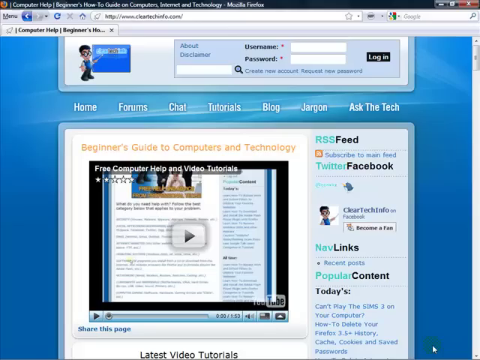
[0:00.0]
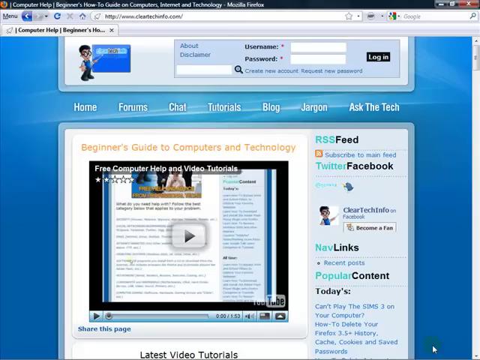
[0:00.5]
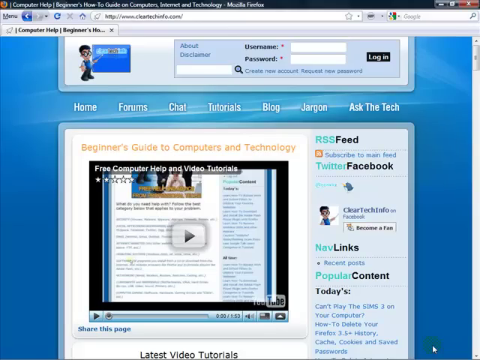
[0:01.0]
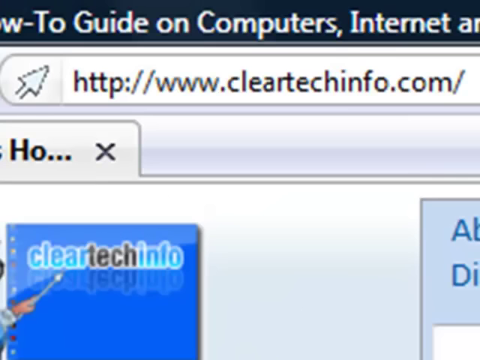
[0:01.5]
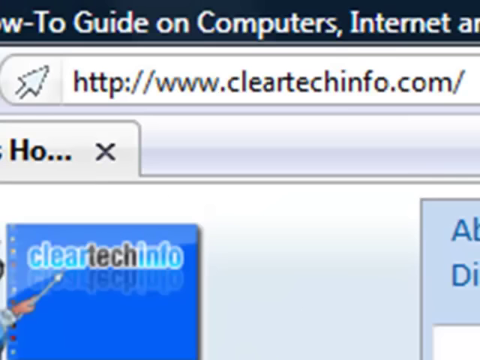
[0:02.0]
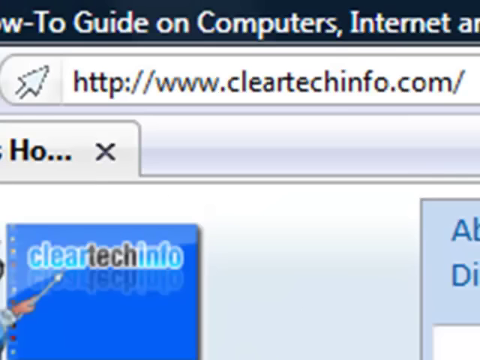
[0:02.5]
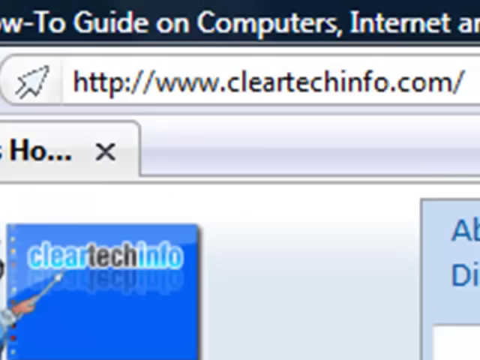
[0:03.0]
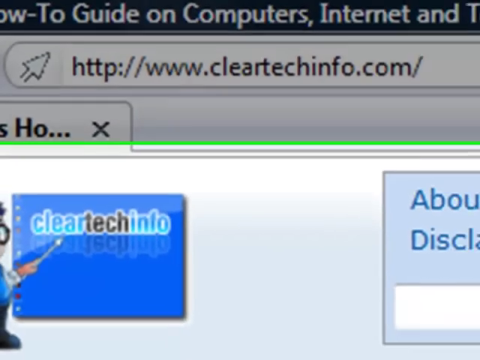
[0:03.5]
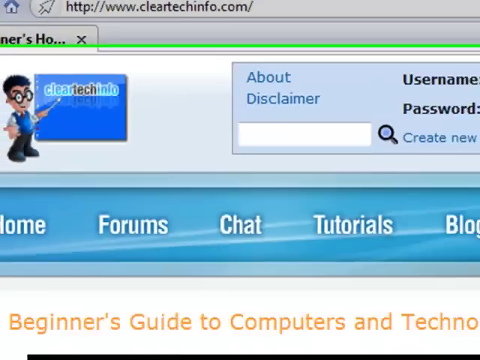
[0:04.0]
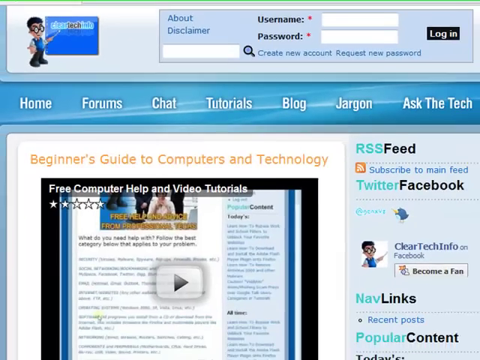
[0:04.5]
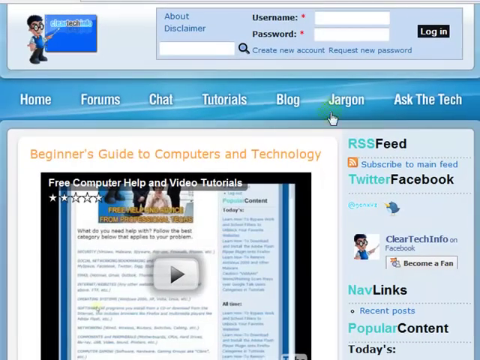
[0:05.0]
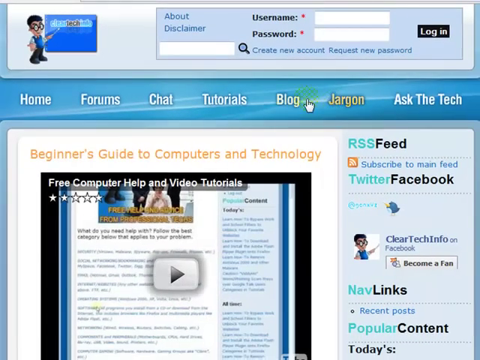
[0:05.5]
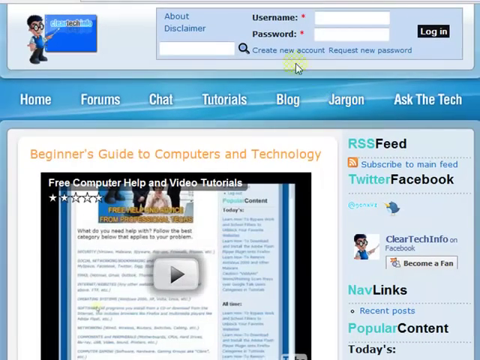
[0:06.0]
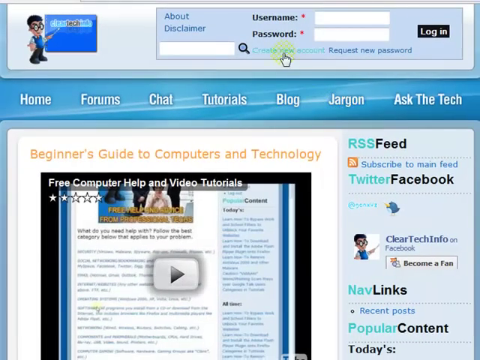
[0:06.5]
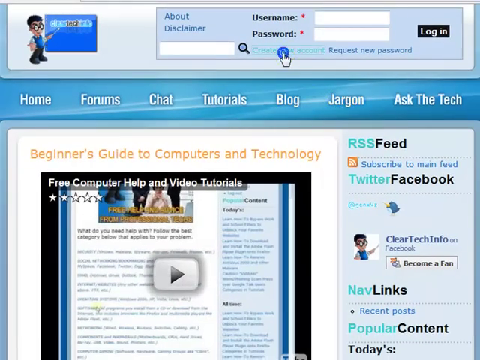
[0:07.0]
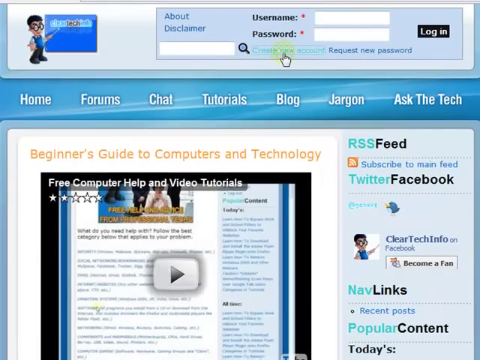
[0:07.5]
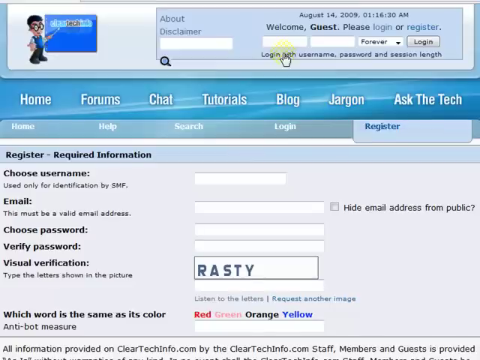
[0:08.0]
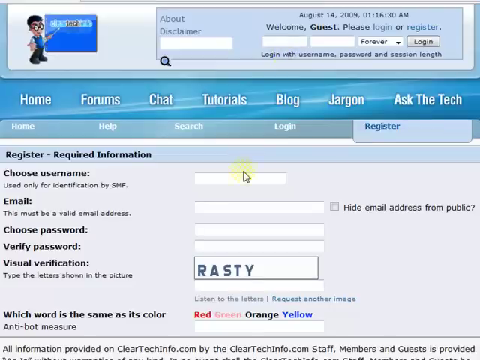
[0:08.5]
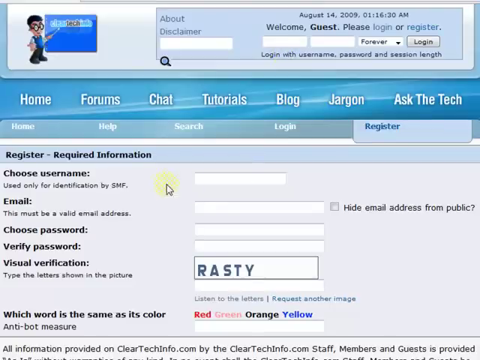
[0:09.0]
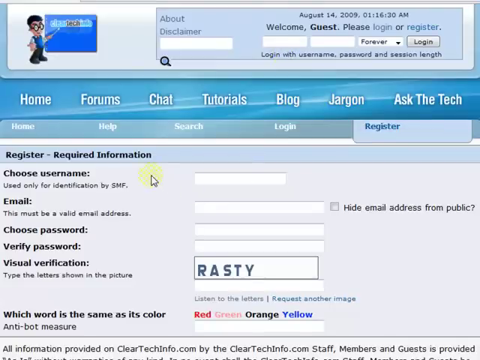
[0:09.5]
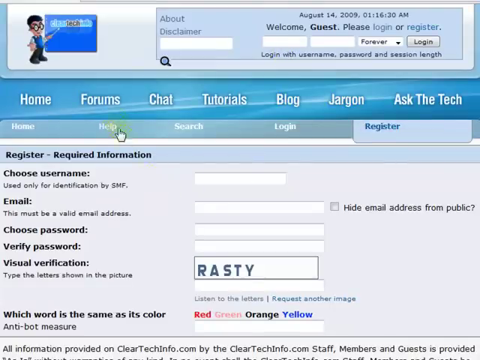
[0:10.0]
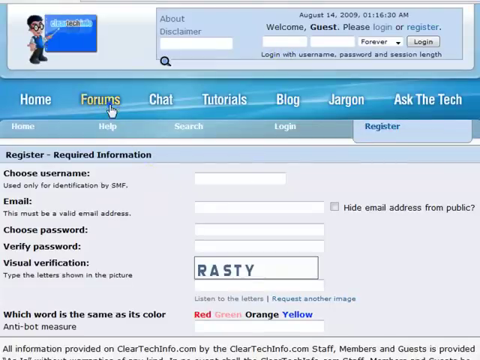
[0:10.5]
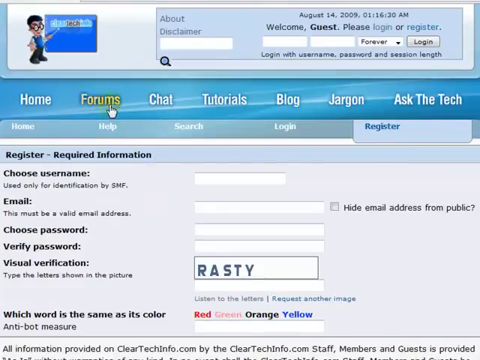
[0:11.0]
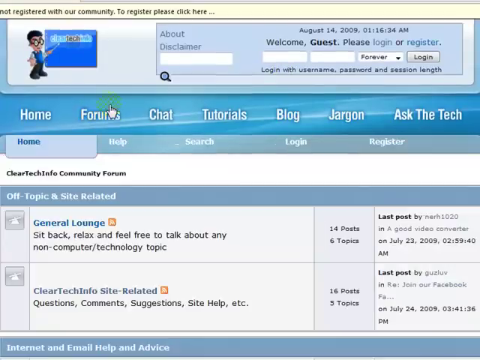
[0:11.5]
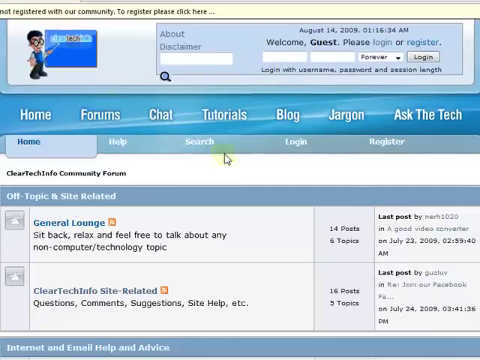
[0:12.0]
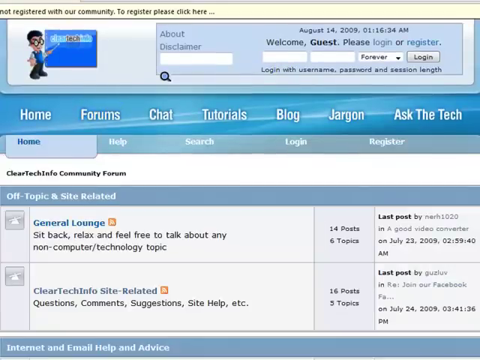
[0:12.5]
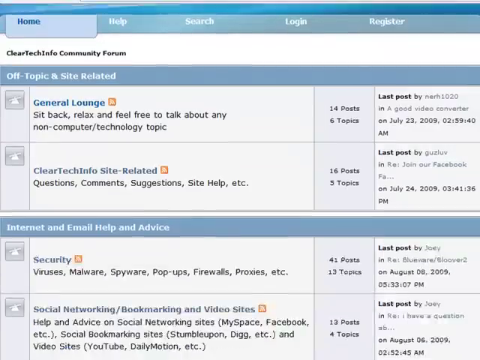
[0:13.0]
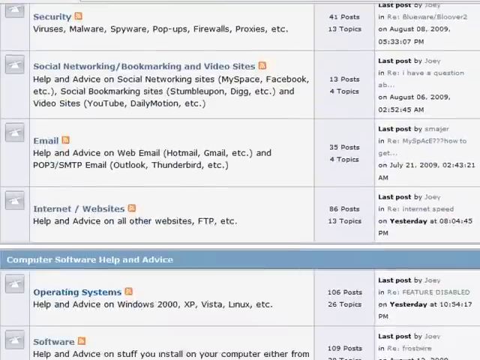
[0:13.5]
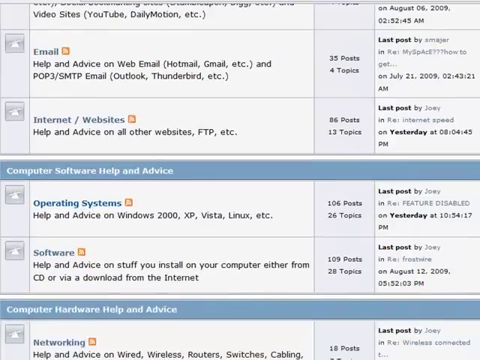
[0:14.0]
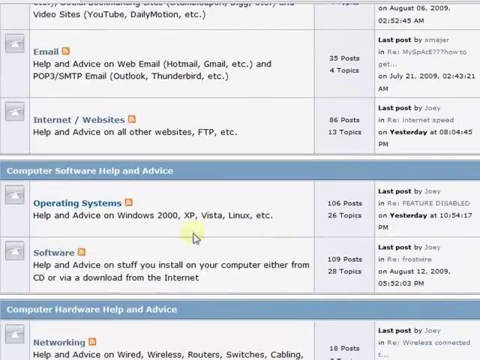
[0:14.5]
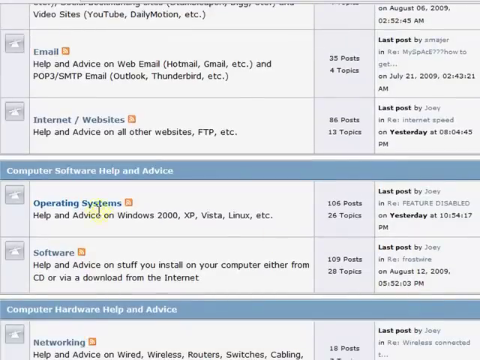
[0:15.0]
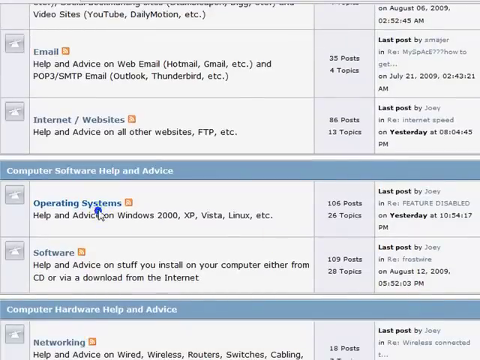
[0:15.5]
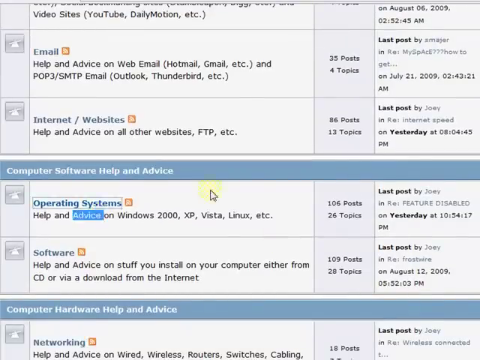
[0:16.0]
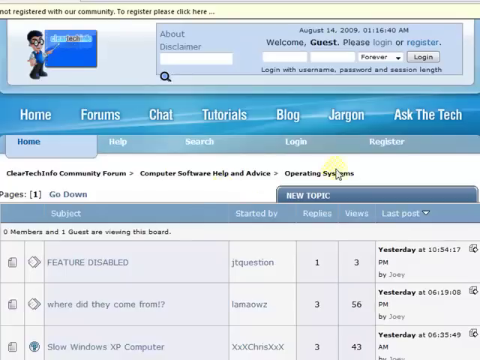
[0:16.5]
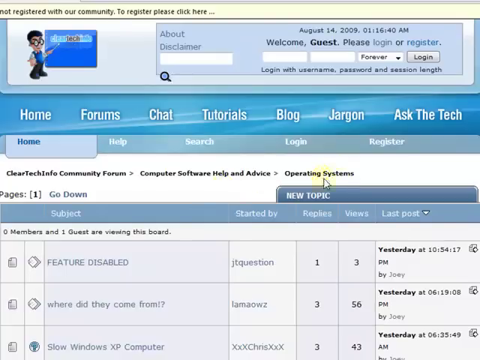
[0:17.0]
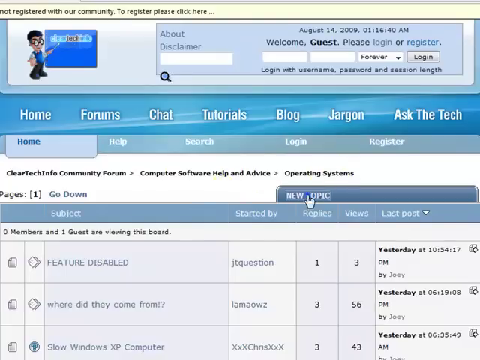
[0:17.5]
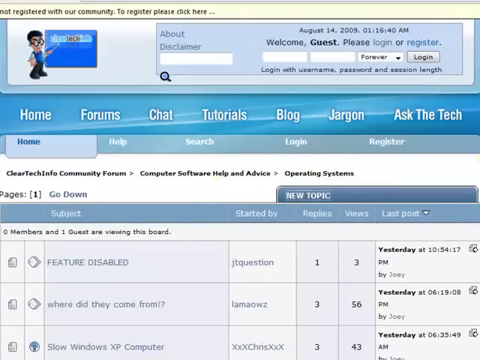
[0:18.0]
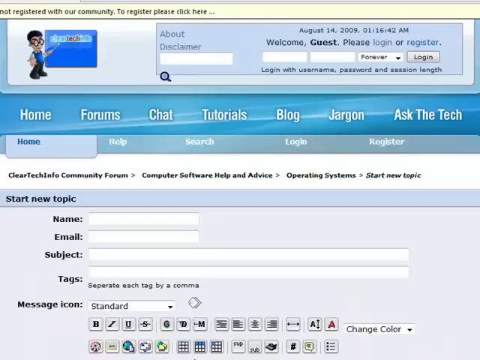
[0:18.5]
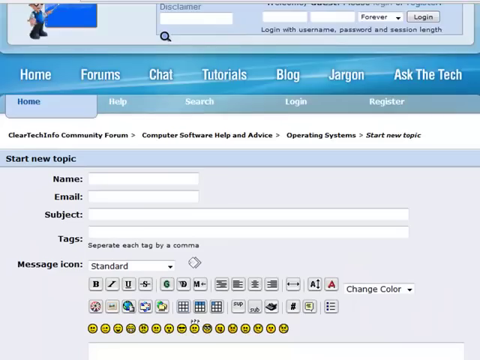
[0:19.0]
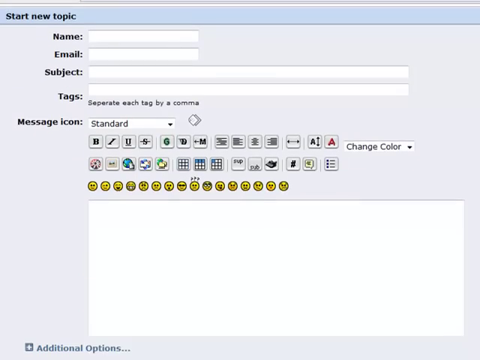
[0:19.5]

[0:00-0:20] An old 4:3 video shows a Mozilla Firefox window, with the small Firefox logo in the upper left-hand corner and the red X close button on the right-hand side. The website is hard to make out, but the right-hand side appears to refer to Facebook and Twitter. On a white background is "Beginner's Guide to Computers and Technology", along with a very old embedded YouTube video. The view moves to the top and zooms in on the address bar, which reads www.cleartechinfo.com, then zooms back out. The person moves the mouse all over the place, with a cursor highlighter enabled so the mouse position is easier to see. They click on something, possibly "register", then click on the forums and scroll down through them. Next they click on operating systems, where the topics concern things like Windows XP, and they go to create a new topic.